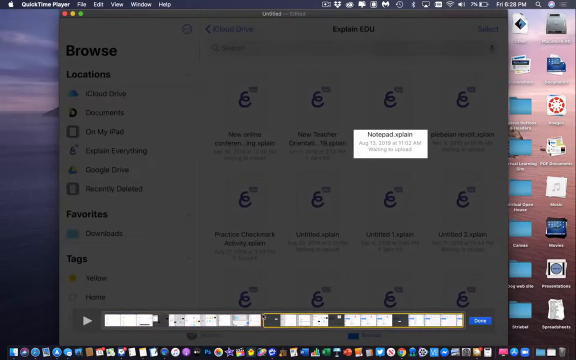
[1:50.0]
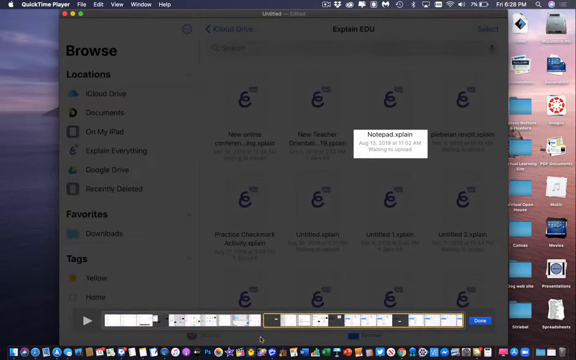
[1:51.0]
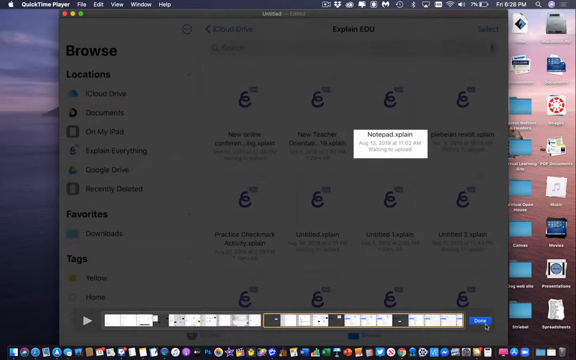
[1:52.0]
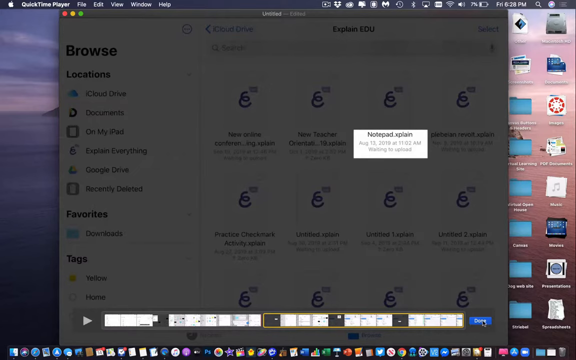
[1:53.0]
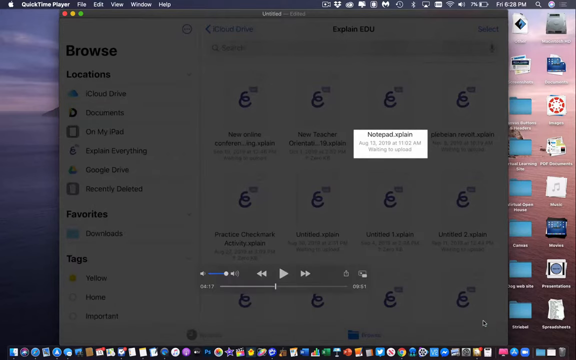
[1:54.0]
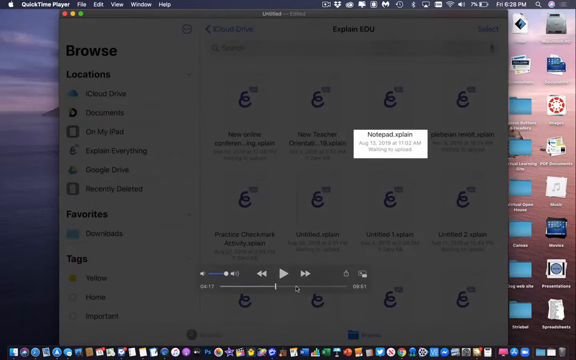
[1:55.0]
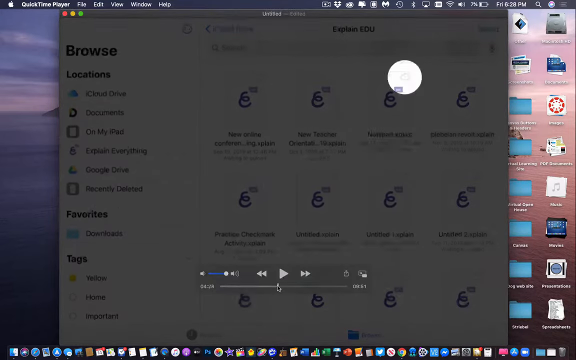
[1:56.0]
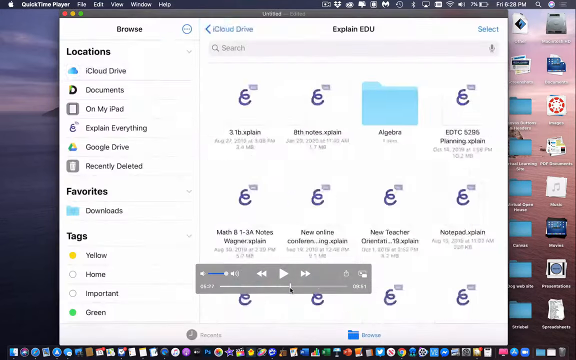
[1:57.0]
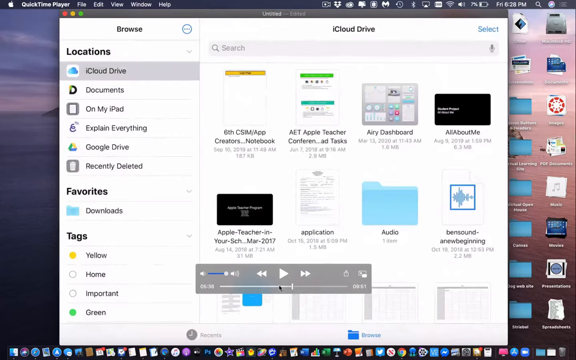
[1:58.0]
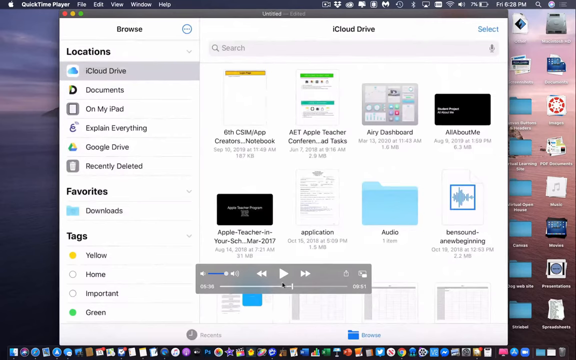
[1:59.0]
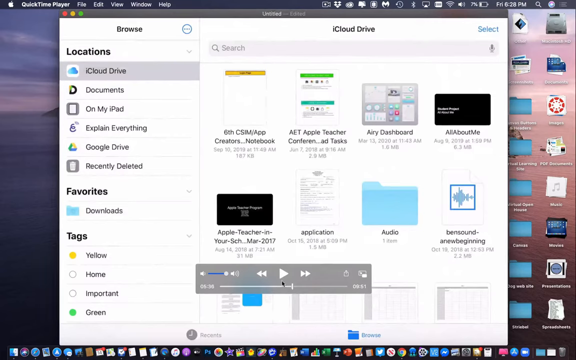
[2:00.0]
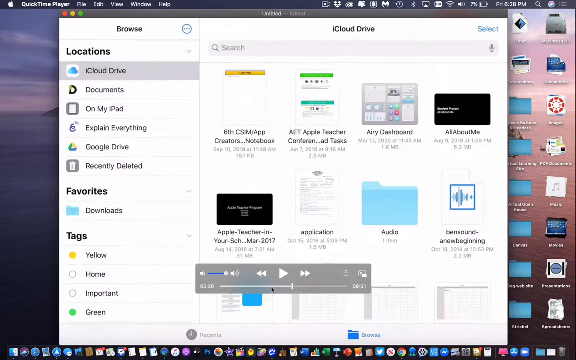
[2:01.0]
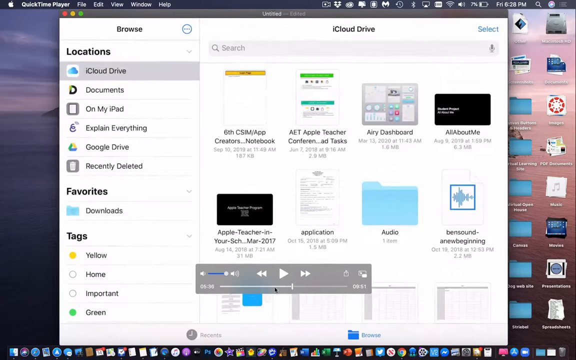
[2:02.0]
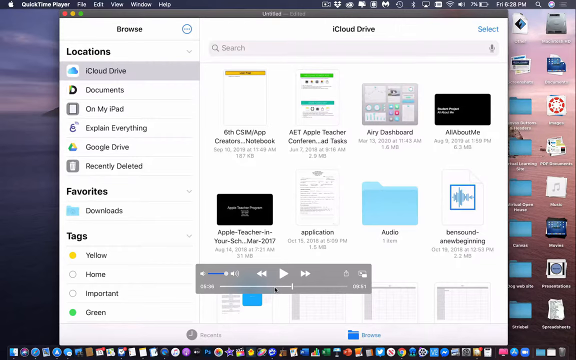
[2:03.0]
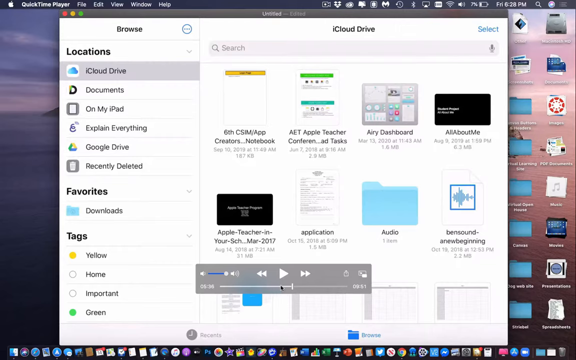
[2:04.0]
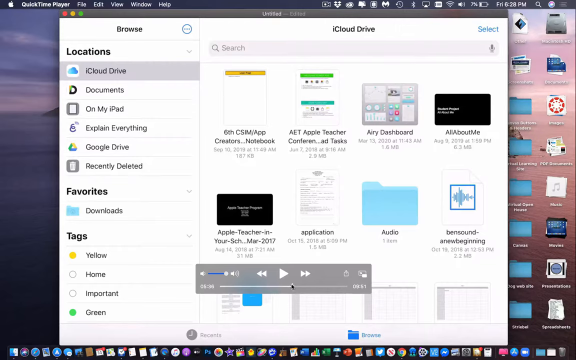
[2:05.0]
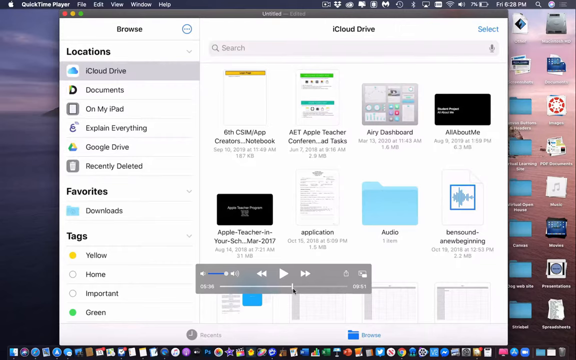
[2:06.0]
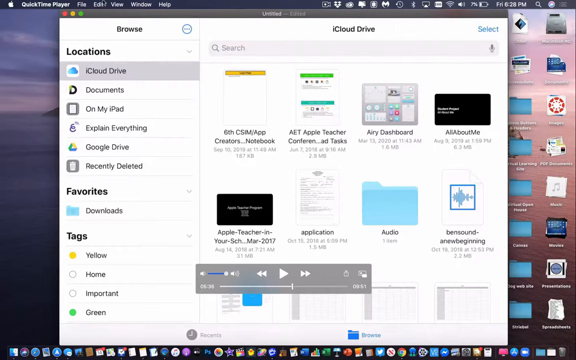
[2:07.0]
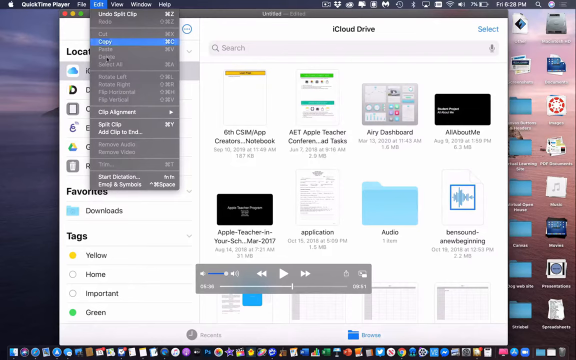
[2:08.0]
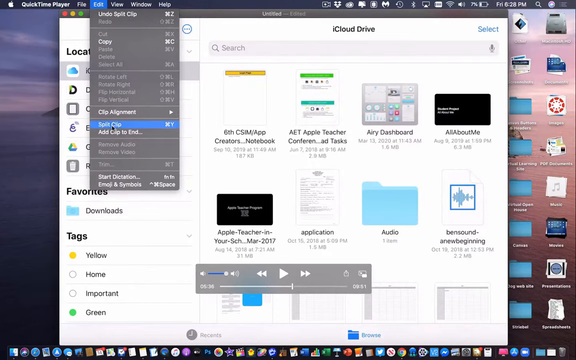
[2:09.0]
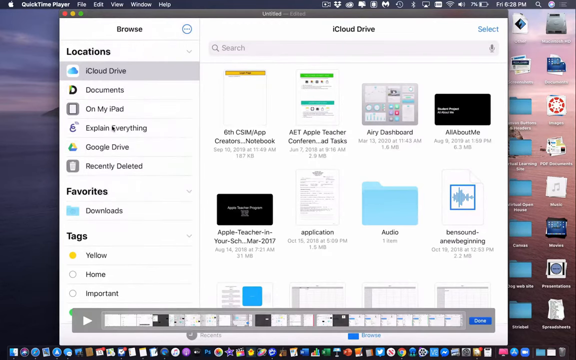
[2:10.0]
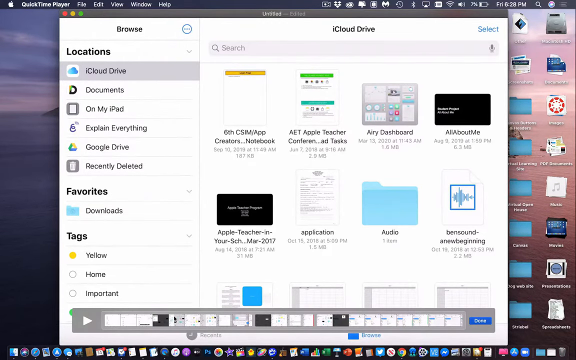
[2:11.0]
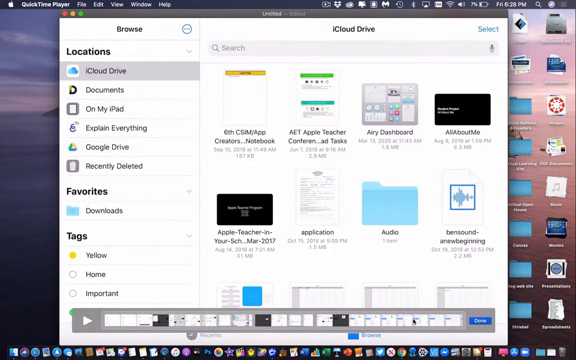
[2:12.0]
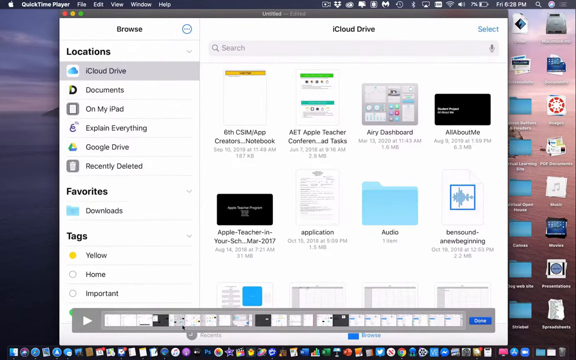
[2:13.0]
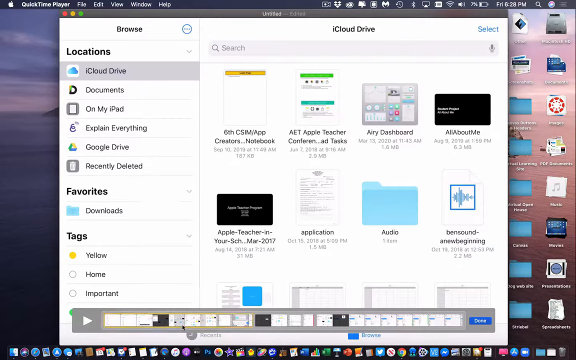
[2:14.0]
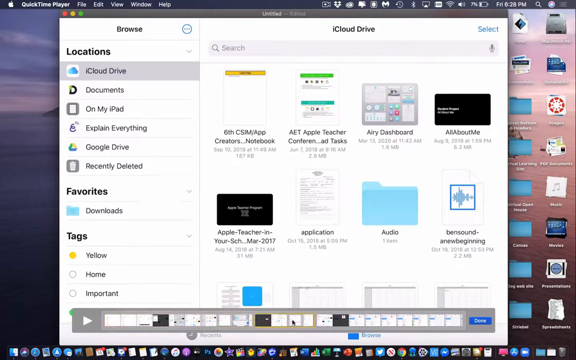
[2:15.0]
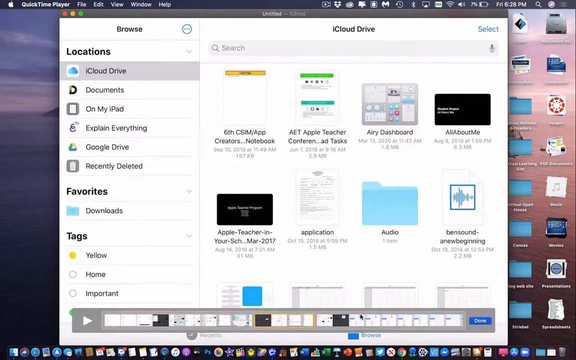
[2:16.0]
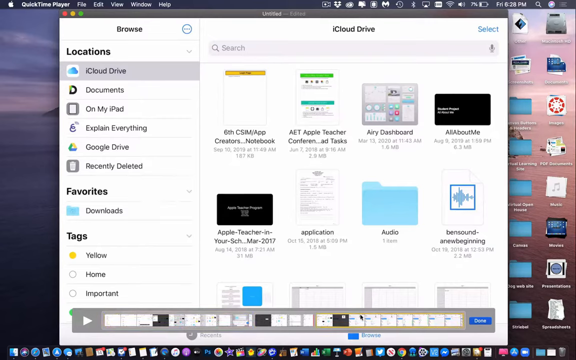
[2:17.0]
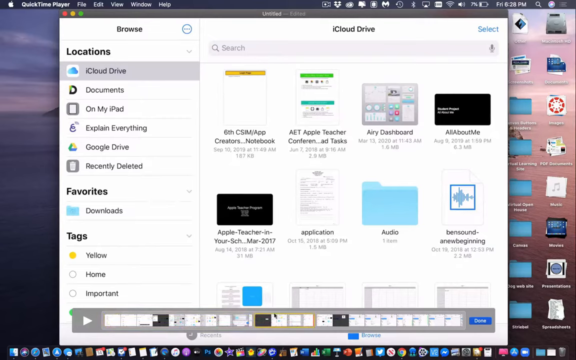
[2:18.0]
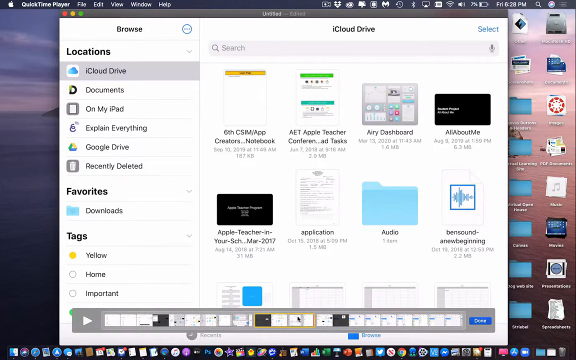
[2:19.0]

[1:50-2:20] A video is playing in the QuickTime Player application on an iPad, and the person is editing it. At the very bottom is a bar that allows different parts of the video to be edited; the video is presented as different clips on the bar, and a section on the right side of the bar is highlighted. A lot of the screen is kind of blacked out, with a highlighted portion in the center that says "Notepad.explain" along with a creation date: "August 13, 2019, 11.02 a.m., waiting to upload." The mouse cursor is at the bottom where the clip is being split, and a button on the right side of that bar says "Done." The cursor hovers over Done and clicks it, and a somewhat transparent video player appears in the center of the screen with play, rewind, fast-forward and volume buttons and the current position in the video, 4 minutes and 17 seconds. The cursor goes to the play bar and pulls the video forward, showing different parts of the video, then stops. The cursor does a few circles underneath the play button, moves up and down, then left and right, then goes to the Edit menu at the top and down to Split Clip, and clicks it. A bar appears for splitting the clip, the person clicks on different parts of the video they want to split, and the cursor does a few circles.